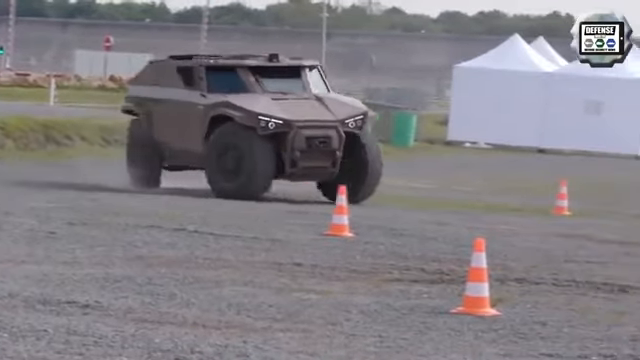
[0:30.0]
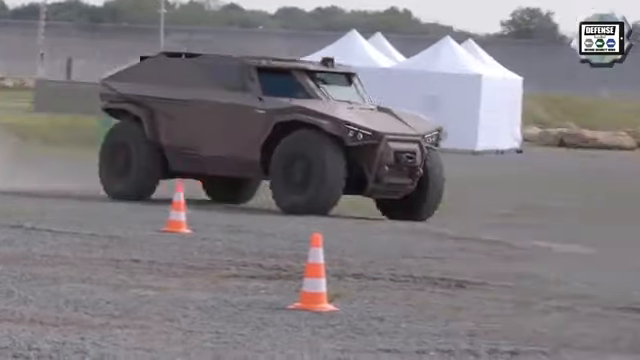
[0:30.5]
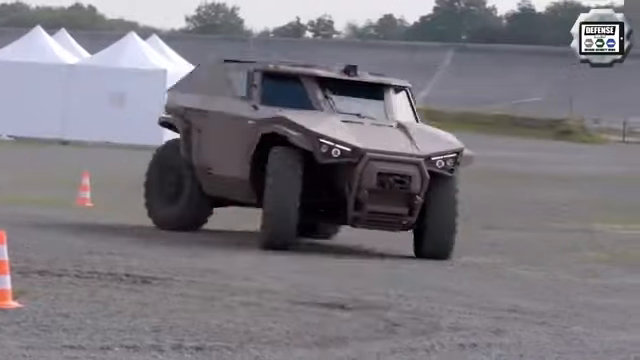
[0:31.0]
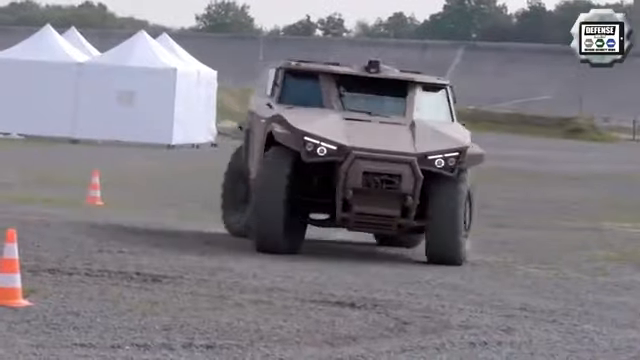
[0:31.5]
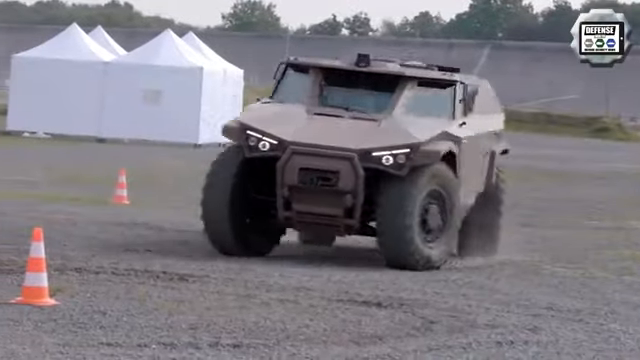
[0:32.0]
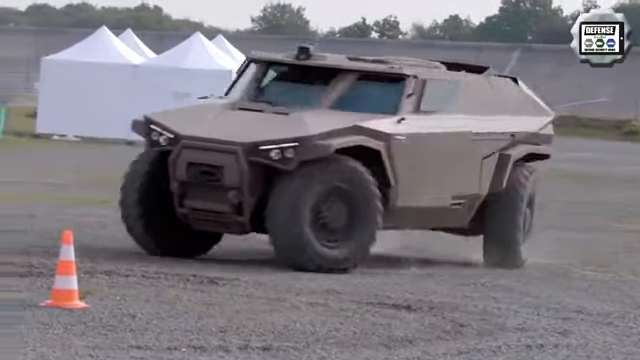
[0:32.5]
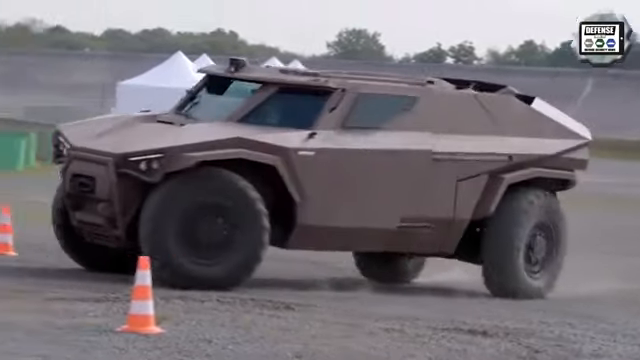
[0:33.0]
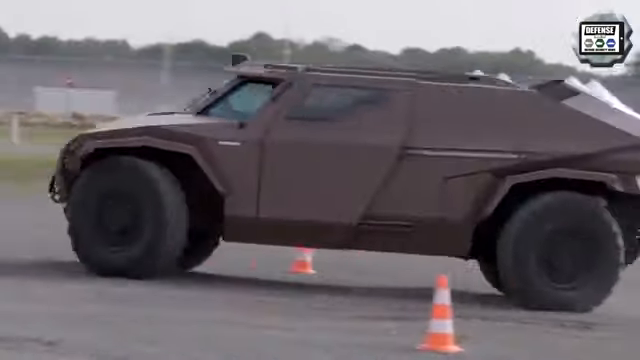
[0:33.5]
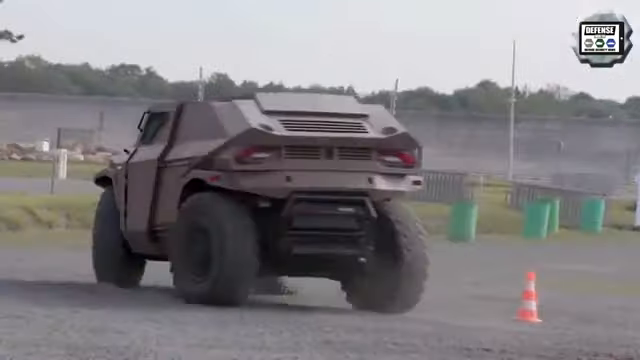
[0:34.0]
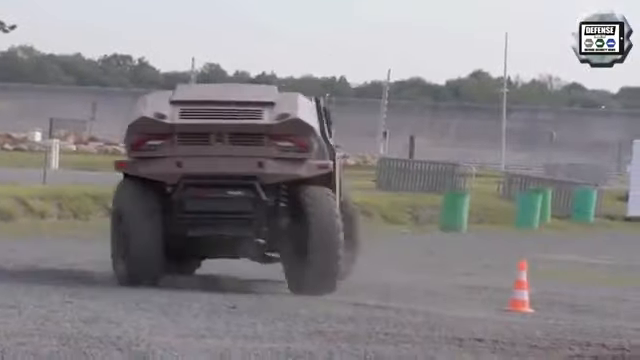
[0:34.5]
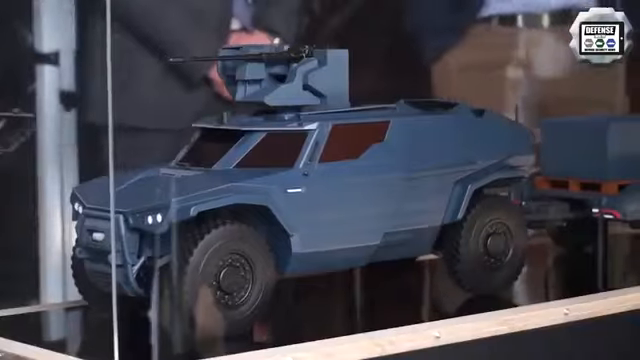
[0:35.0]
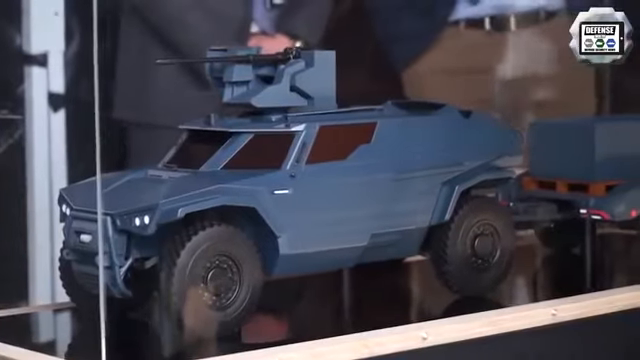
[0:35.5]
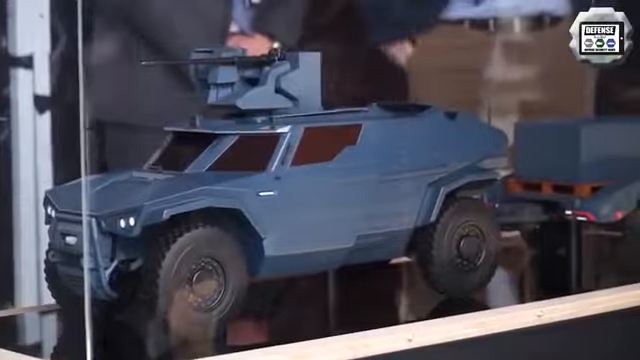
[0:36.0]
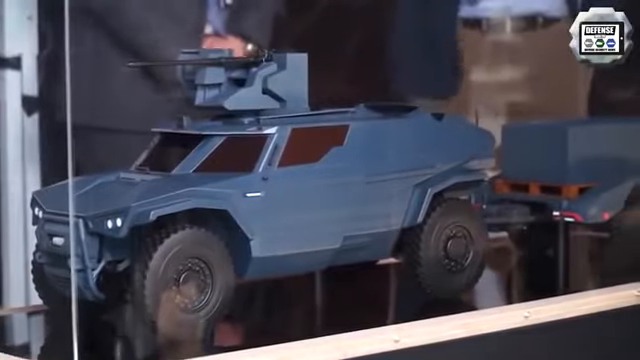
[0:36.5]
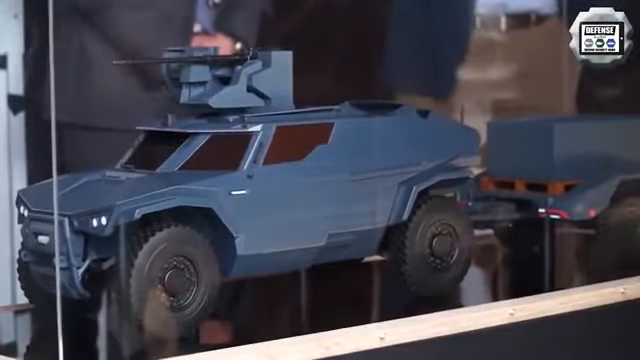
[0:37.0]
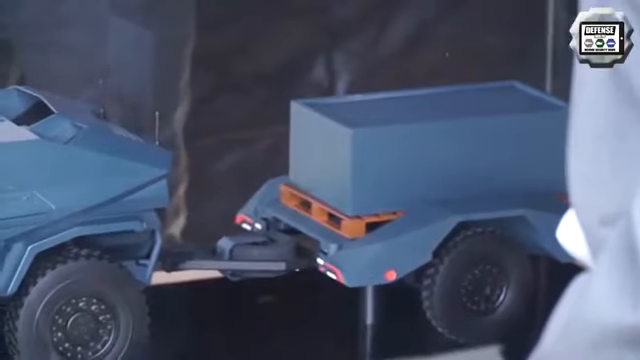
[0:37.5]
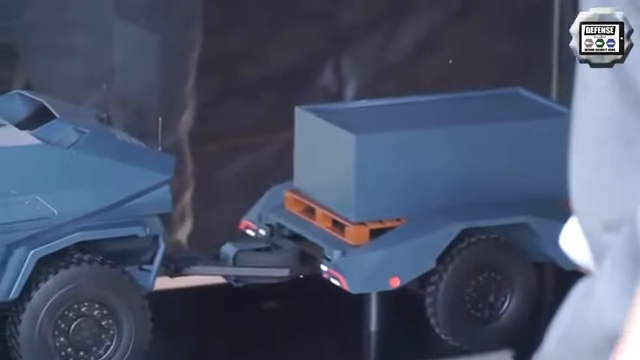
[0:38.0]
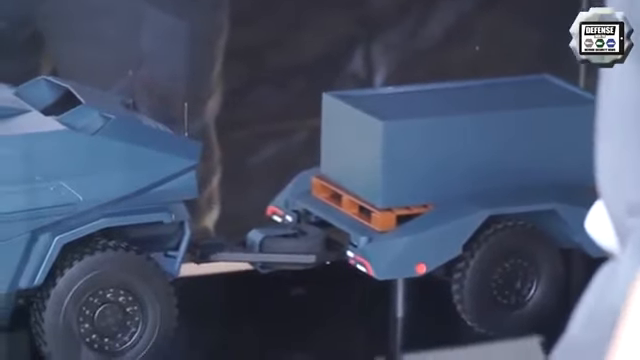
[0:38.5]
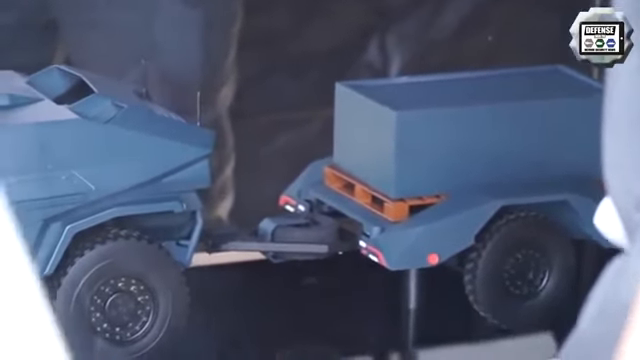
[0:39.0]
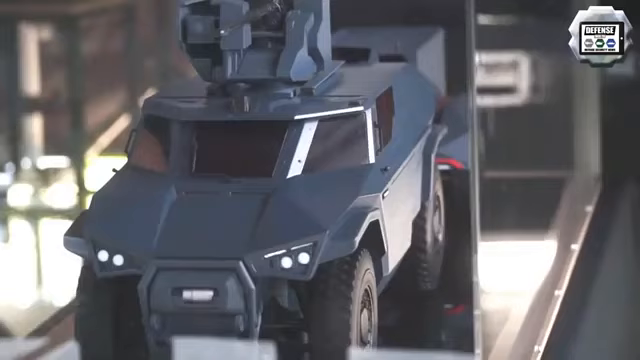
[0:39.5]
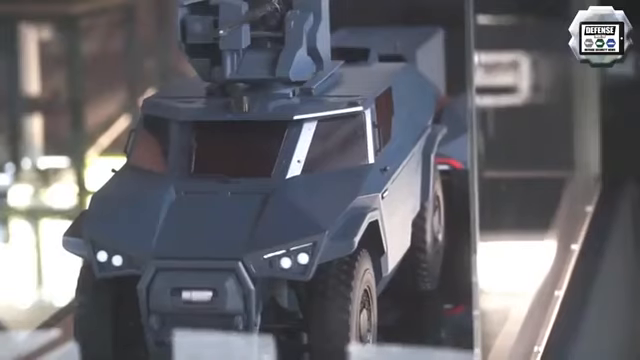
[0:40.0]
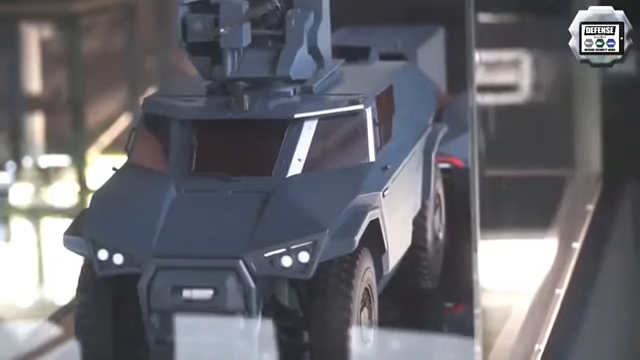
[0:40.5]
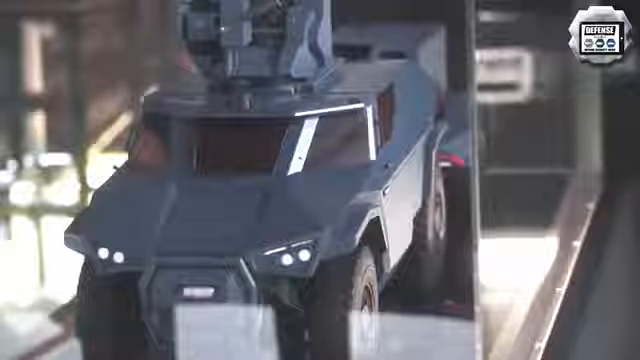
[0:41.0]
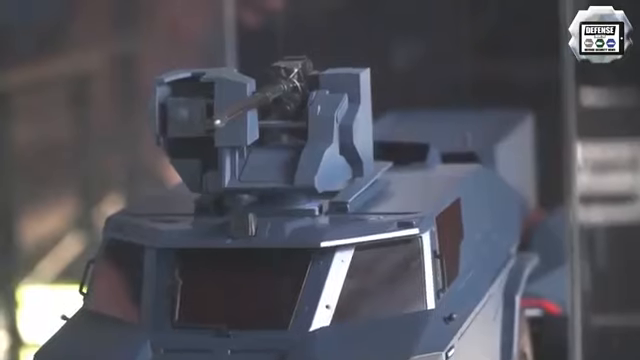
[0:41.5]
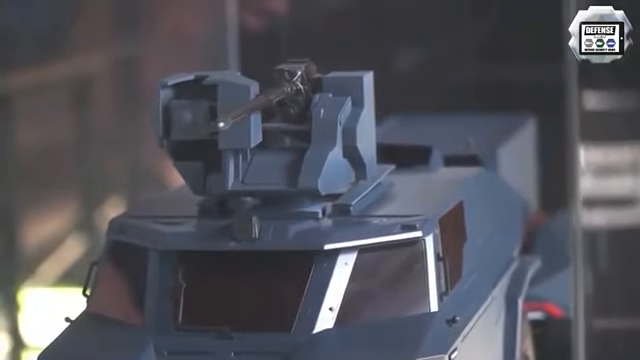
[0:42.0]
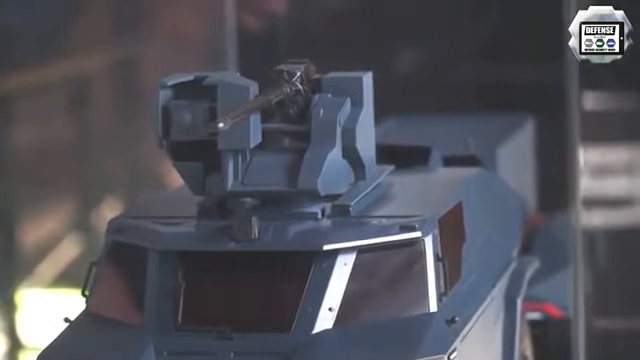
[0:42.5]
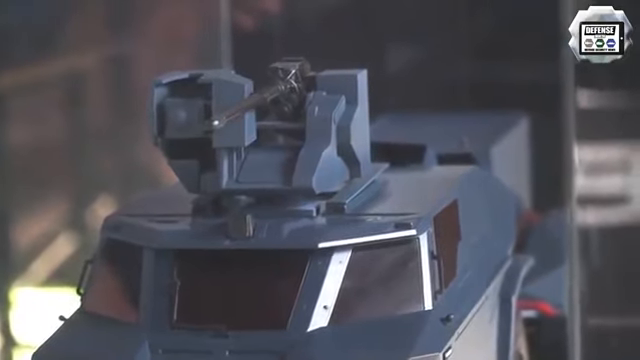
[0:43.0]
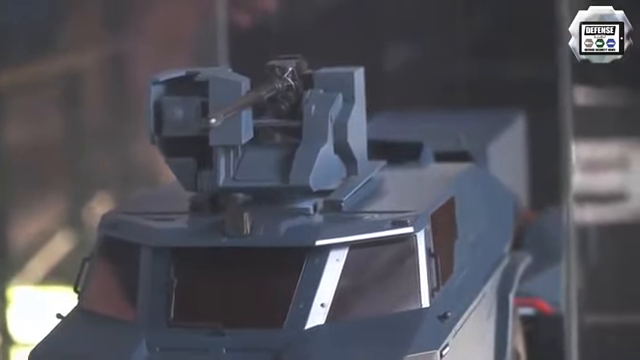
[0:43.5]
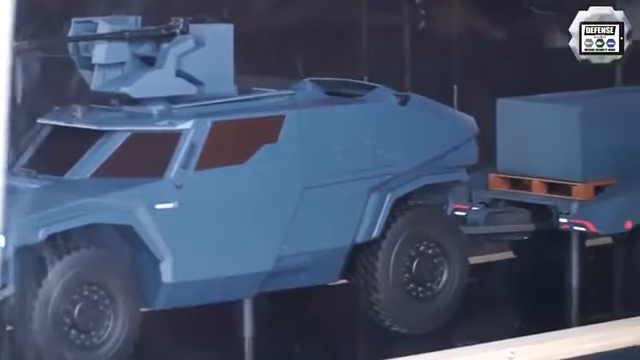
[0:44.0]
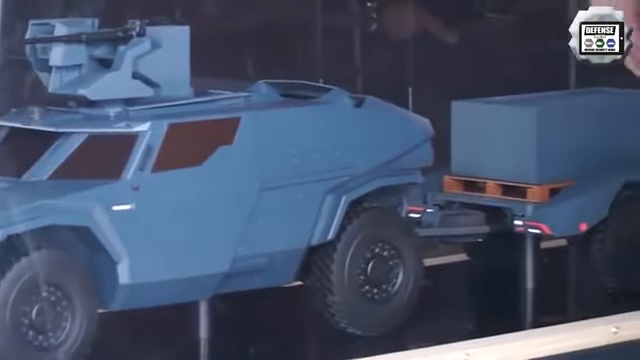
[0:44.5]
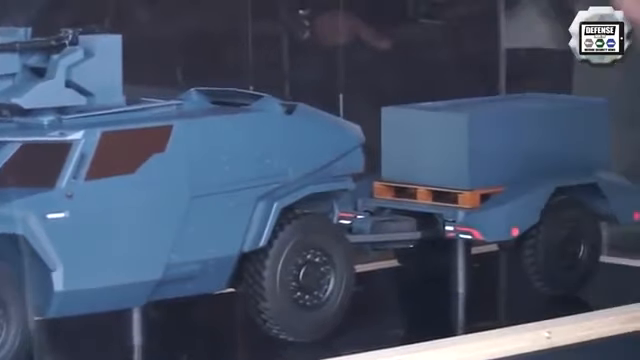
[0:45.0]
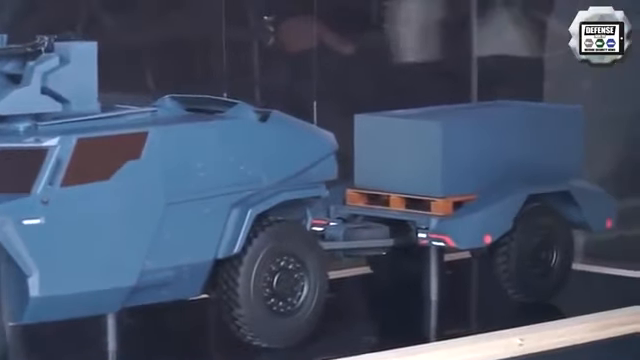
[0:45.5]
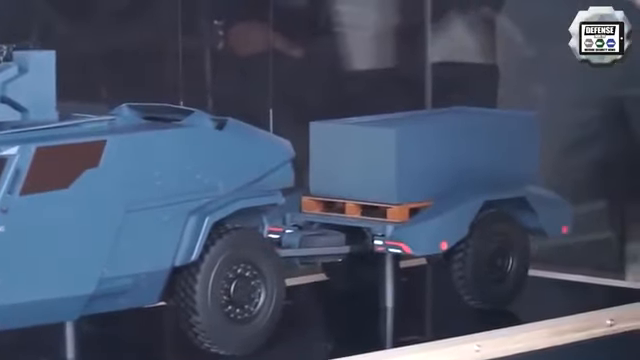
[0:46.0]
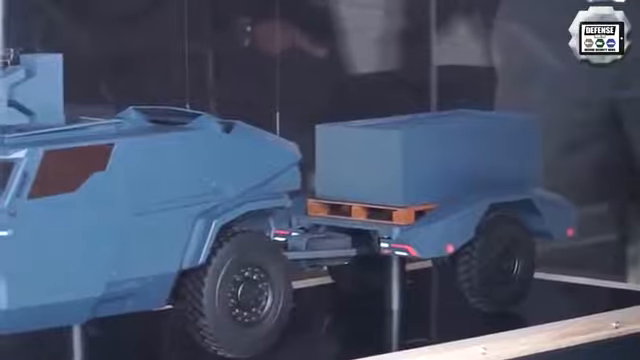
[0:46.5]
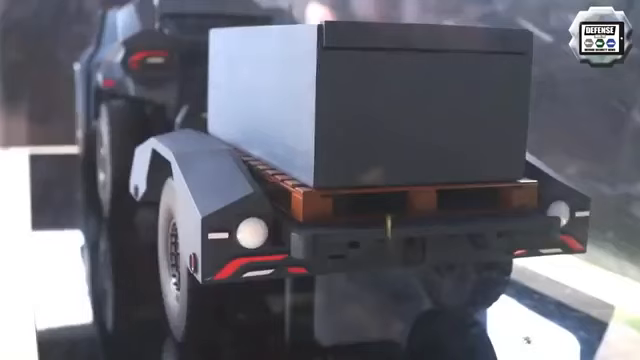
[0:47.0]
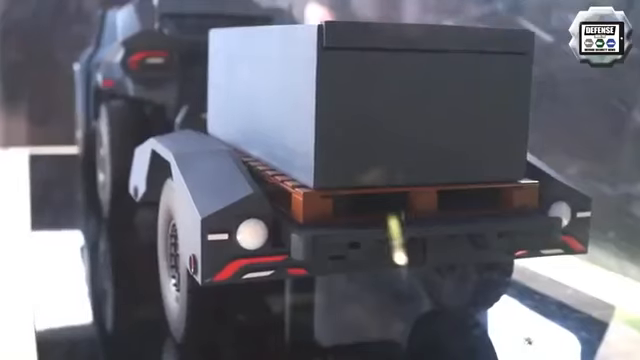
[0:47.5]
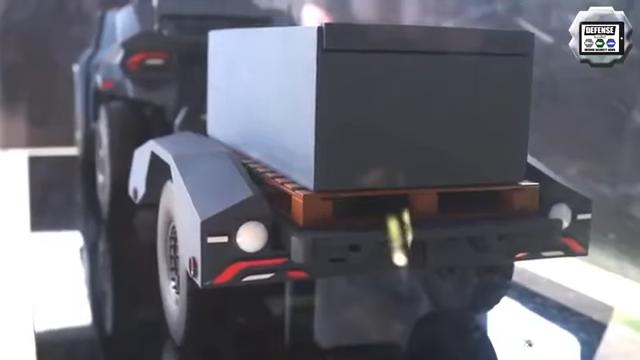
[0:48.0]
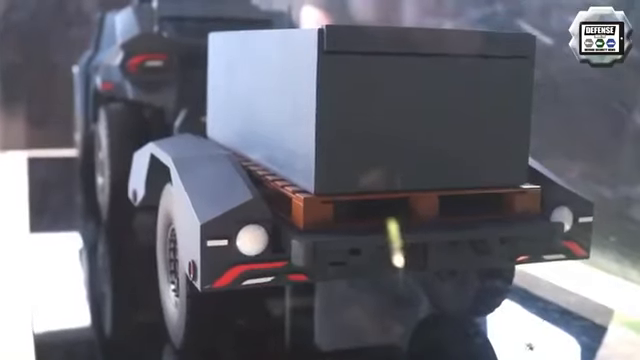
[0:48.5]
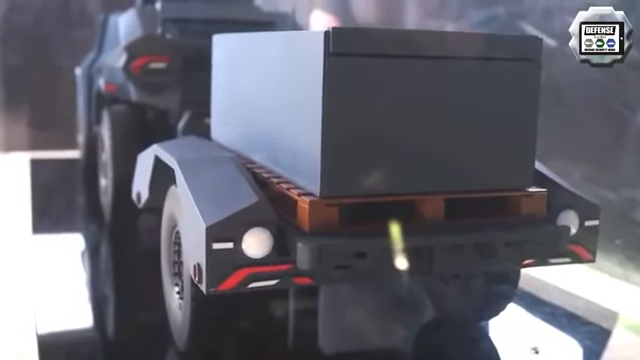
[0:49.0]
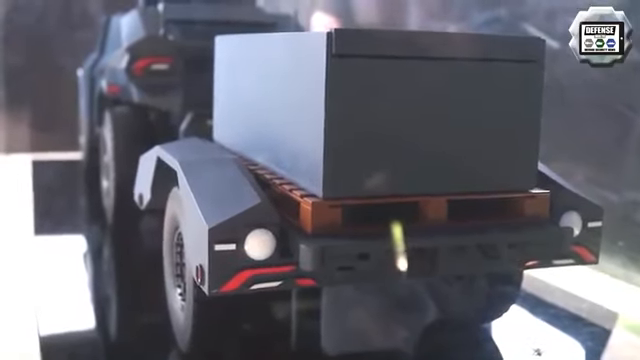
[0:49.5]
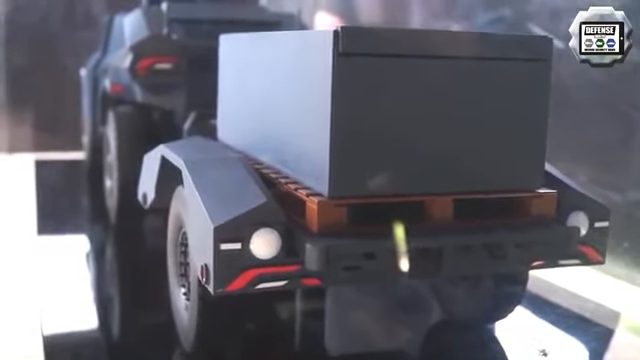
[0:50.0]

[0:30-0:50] A modern Humvee goes around a track set up with orange and white cones. Next, a small-scale model of the vehicle is shown indoors, pulling something behind it. It has a piece of equipment attached to the roof that looks like it might be a camera, with a long black pole protruding from it. Someone's hand swoops by, and the reflection of people looking at the model is visible, including their hands and arms. In the upper right corner there is a gray round circle with jagged edges containing a white box with some information. The new Humvee inside has its lights on. The trailer has a box on it and is on an orange grate.